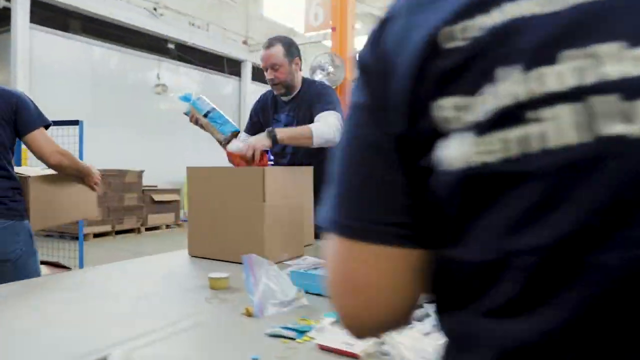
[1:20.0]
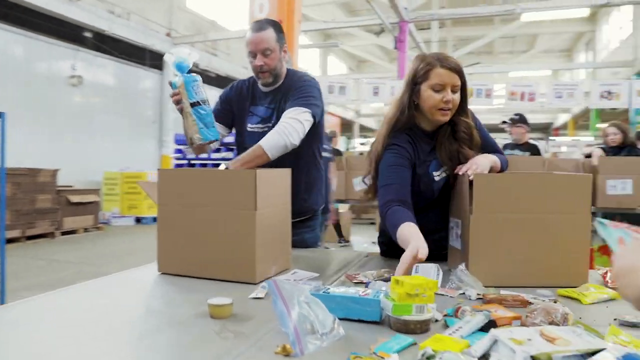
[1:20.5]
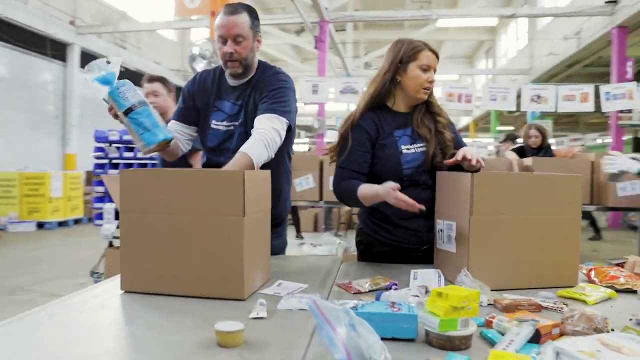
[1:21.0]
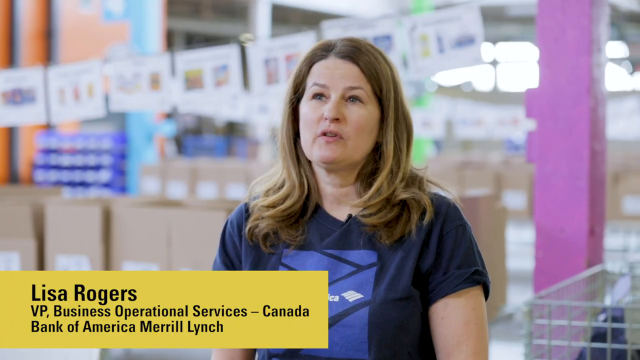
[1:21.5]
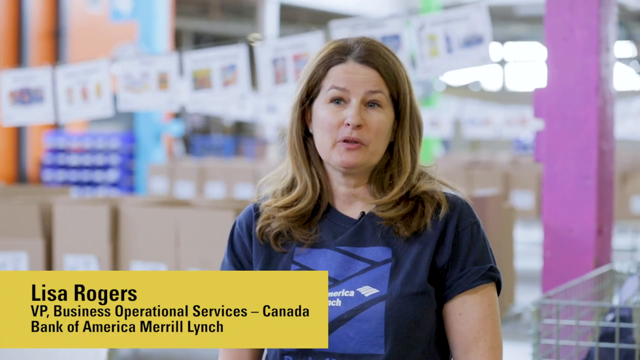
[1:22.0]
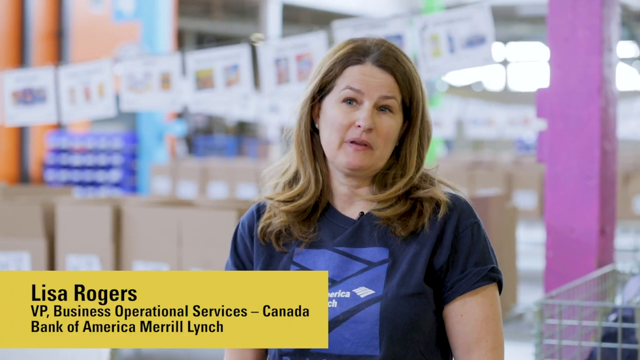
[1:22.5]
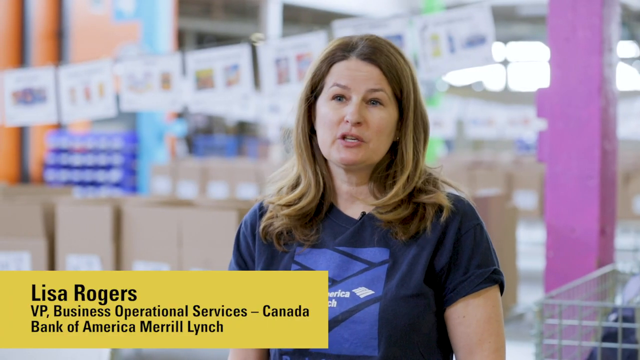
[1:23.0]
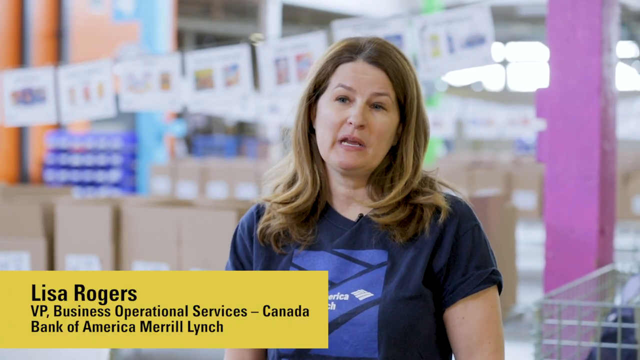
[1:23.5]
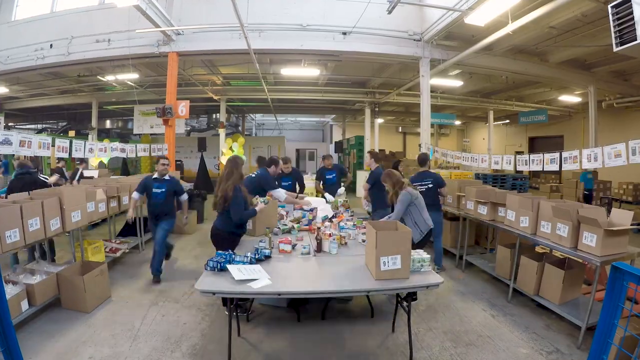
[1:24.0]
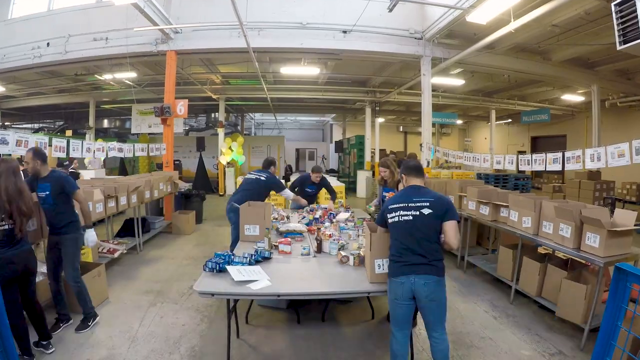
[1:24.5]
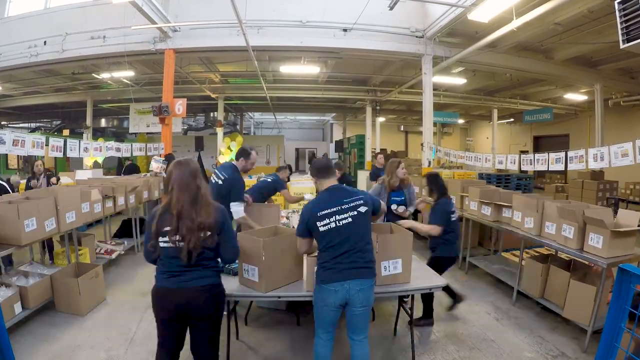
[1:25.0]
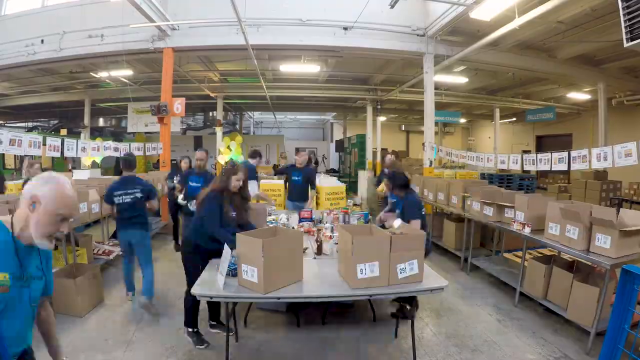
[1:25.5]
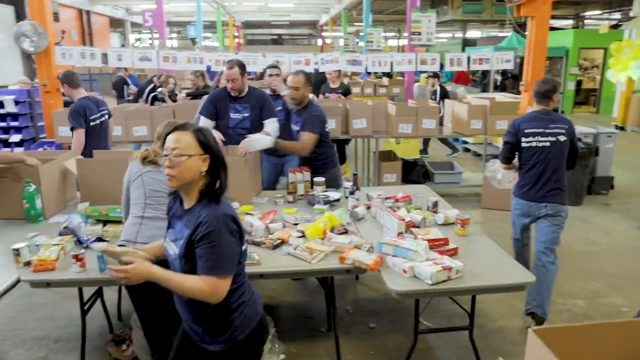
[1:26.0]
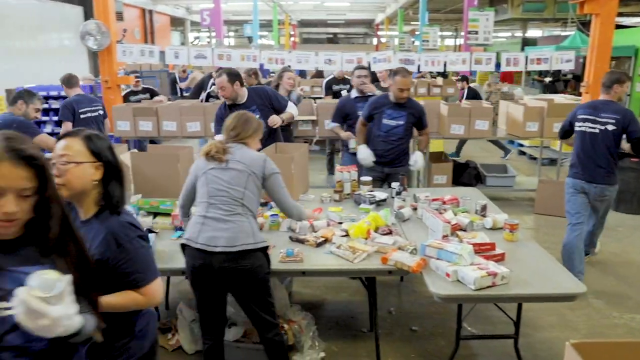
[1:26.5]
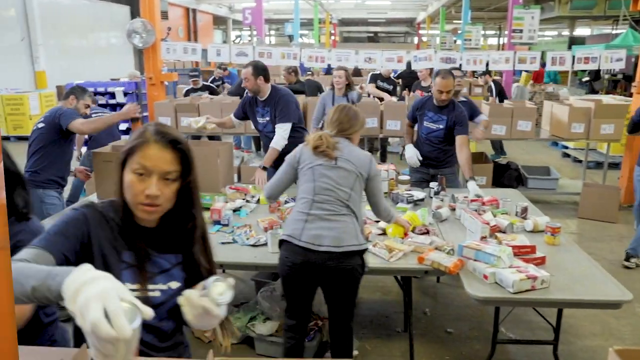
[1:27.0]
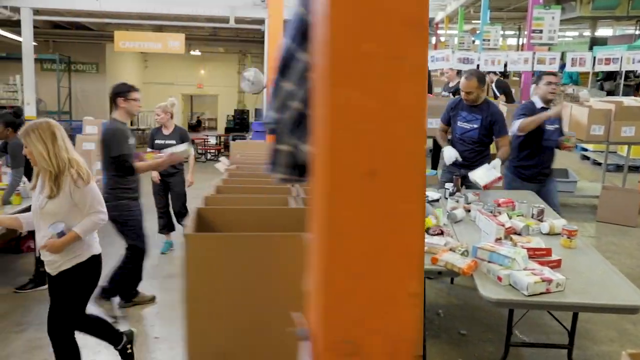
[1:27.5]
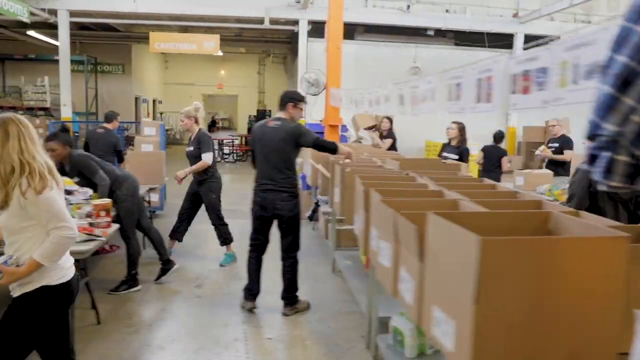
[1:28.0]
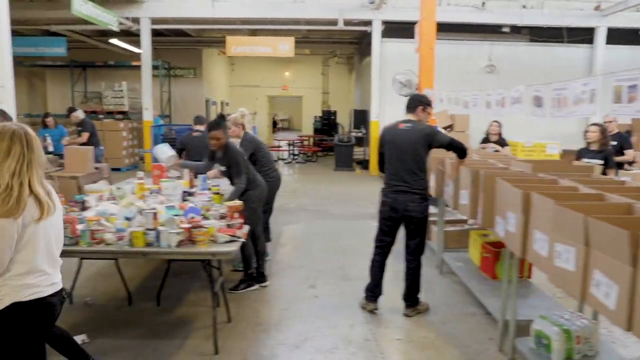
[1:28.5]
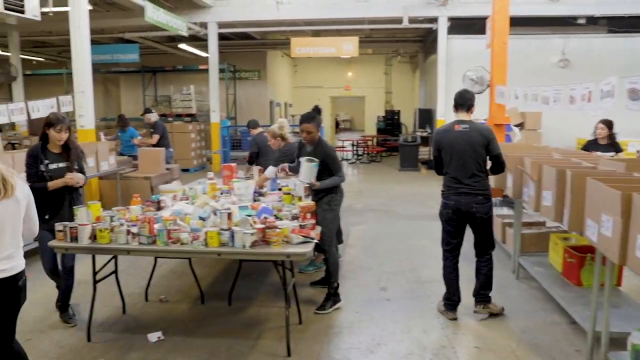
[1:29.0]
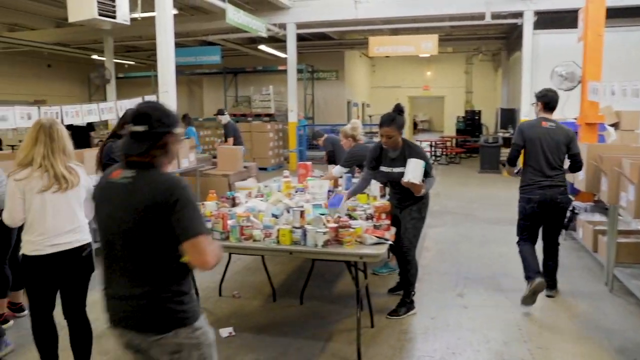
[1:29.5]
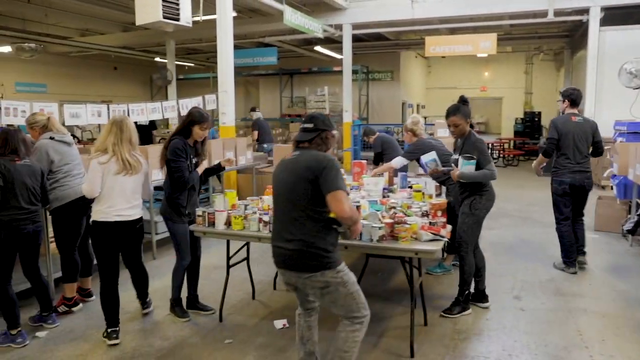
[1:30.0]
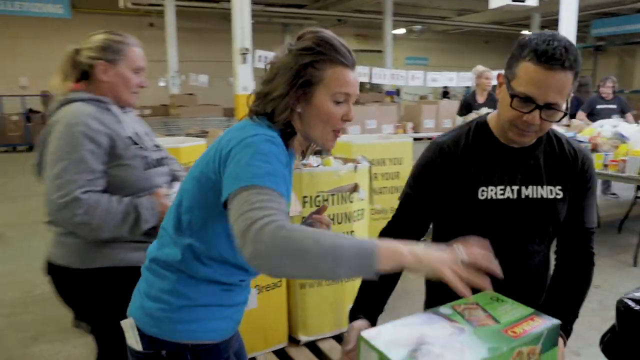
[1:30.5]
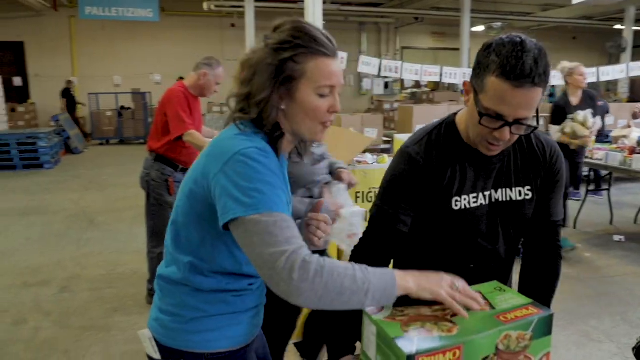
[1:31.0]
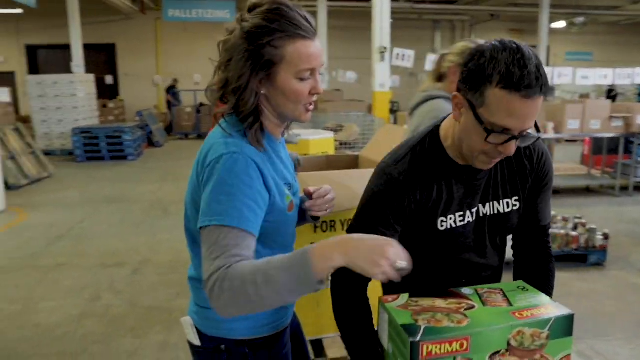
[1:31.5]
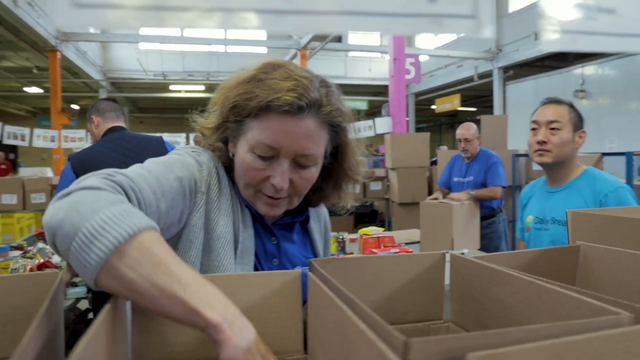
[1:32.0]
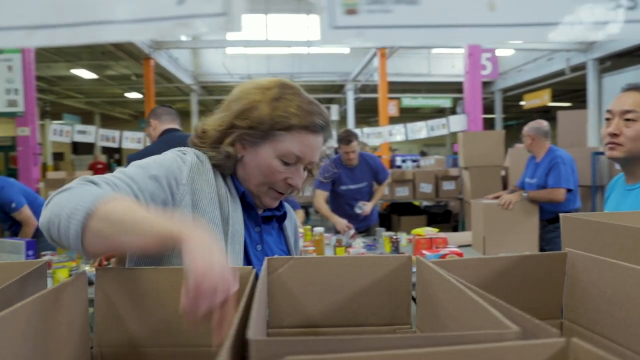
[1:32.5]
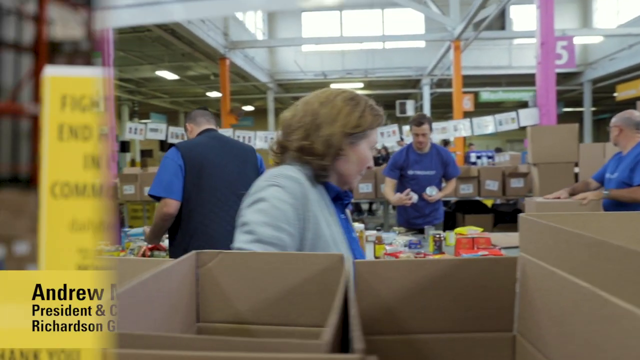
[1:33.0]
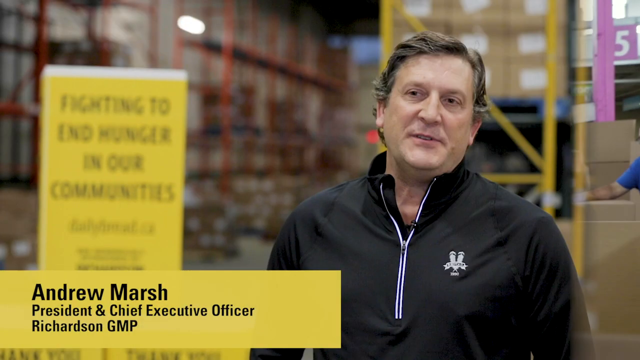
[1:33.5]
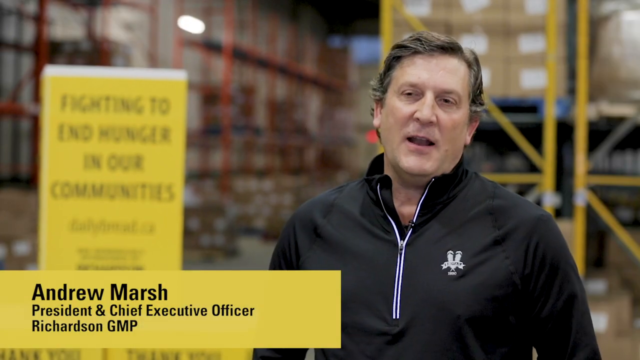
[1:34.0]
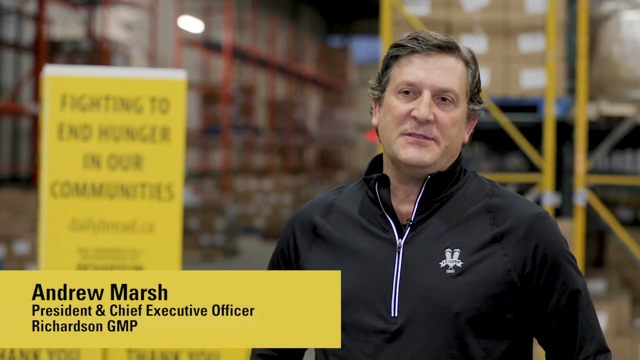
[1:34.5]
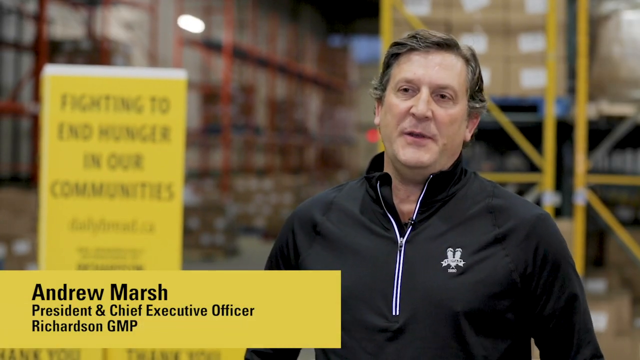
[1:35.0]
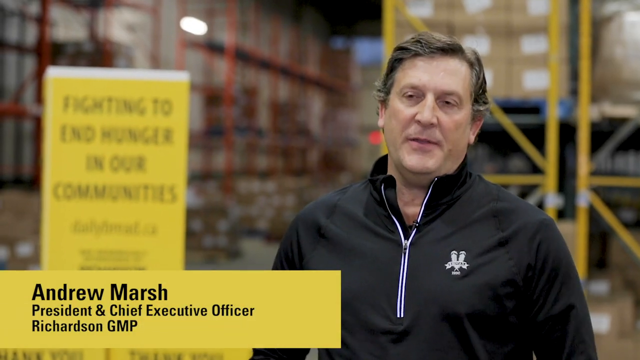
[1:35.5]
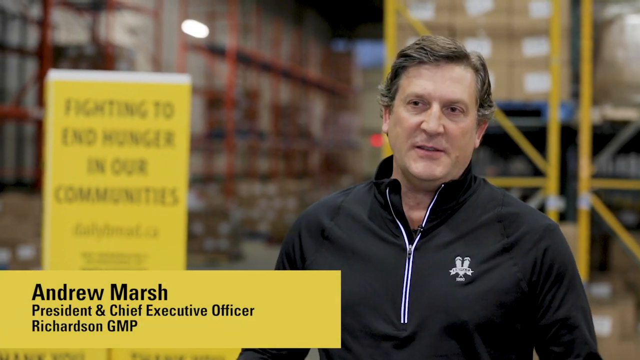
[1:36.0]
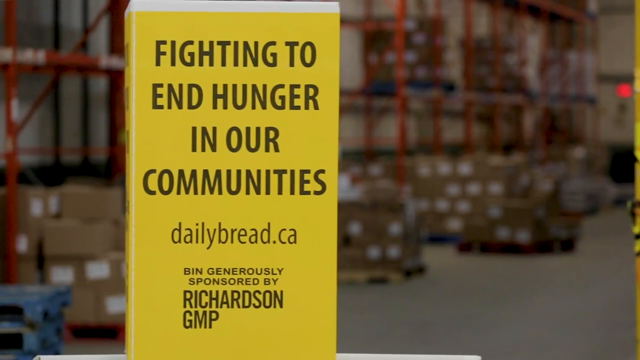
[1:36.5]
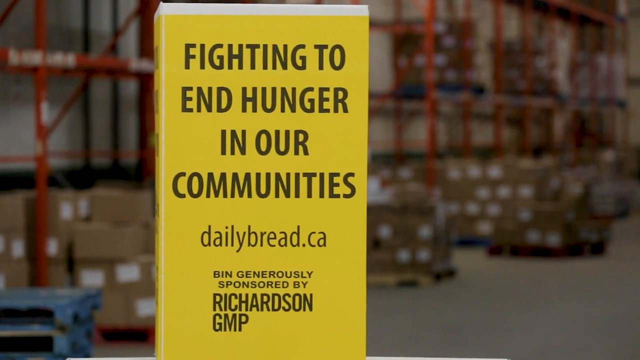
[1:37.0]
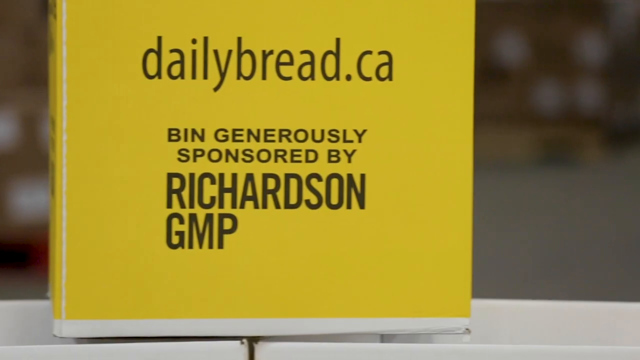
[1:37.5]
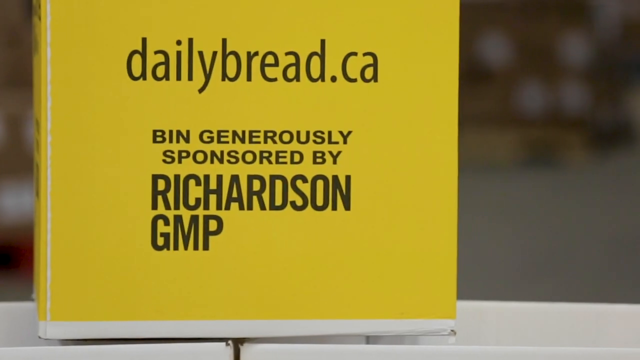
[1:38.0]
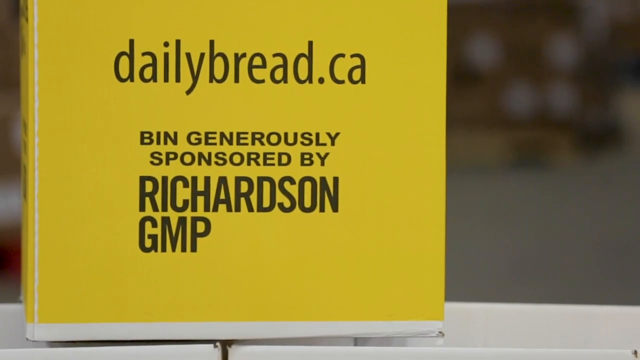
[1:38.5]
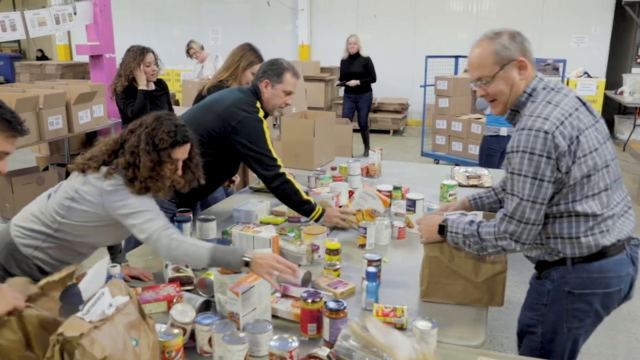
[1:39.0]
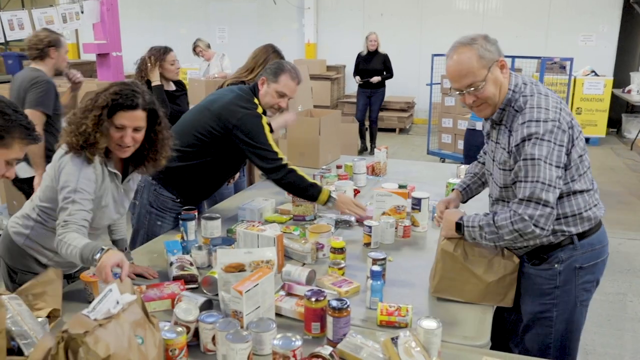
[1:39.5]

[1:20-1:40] A middle-aged man with mixed dark and gray hair and a five o'clock shadow or slight beard wears a dark blue short-sleeved shirt over a white long-sleeved undershirt. He has a watch in his left hand and appears to be putting things inside a small cardboard box, filling it. Next, a Caucasian female with blondish hair with a little brown mixed in wears a dark blue short-sleeved shirt. In the bottom left corner, black text in a yellow rectangle says "Lisa Rogers, VP, Business Operational Services, Canada Bank of America, Merrill Lynch". She is talking to somebody off camera in front of her. A time-lapse or fast-forward then shows people working in the warehouse, putting food in boxes, taking food out of other boxes, and handling food on gray-surfaced tables; about three tables are set side by side so food items laying on them can be sorted. Another angle of the warehouse shows many people working.